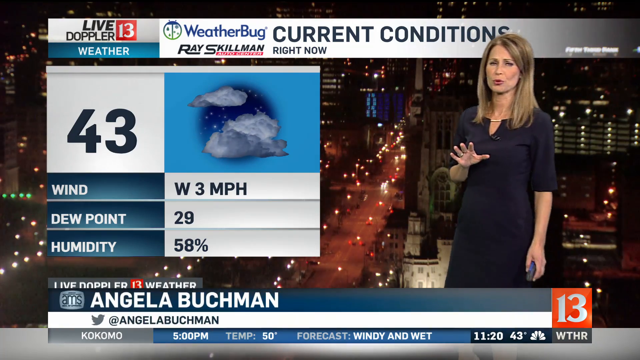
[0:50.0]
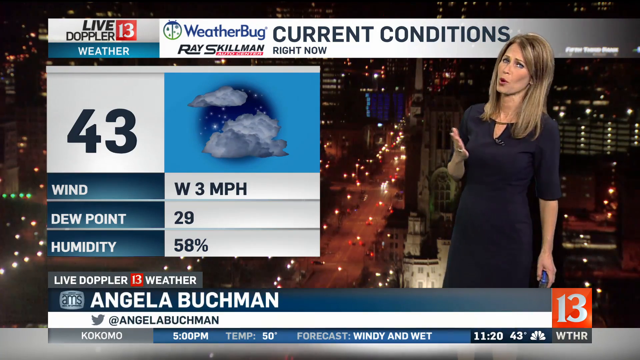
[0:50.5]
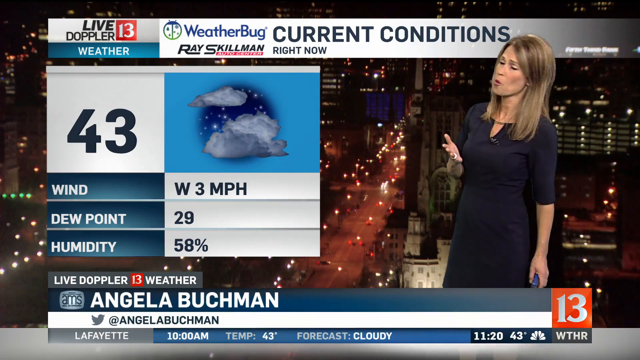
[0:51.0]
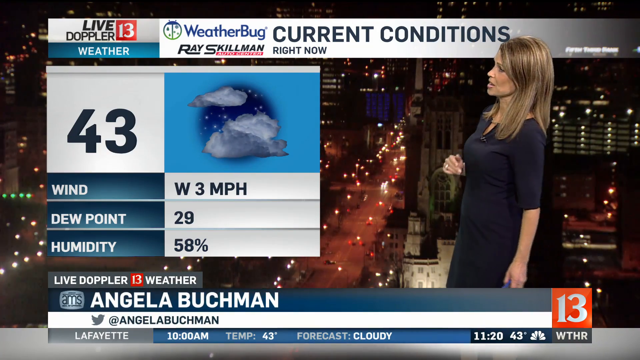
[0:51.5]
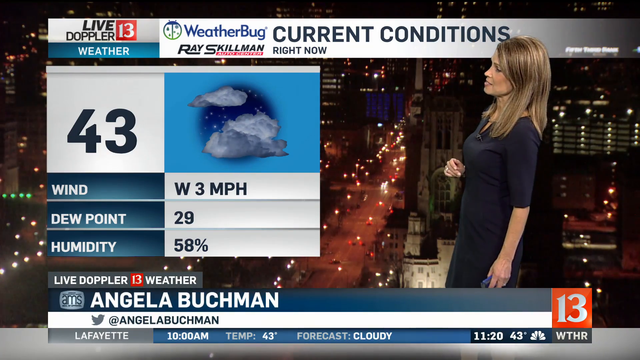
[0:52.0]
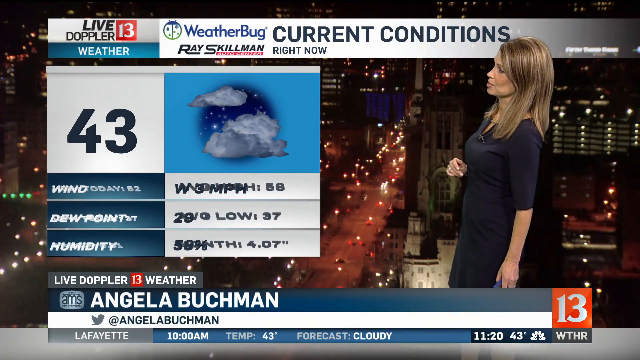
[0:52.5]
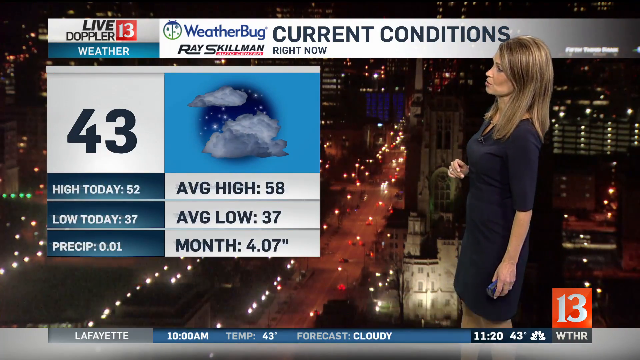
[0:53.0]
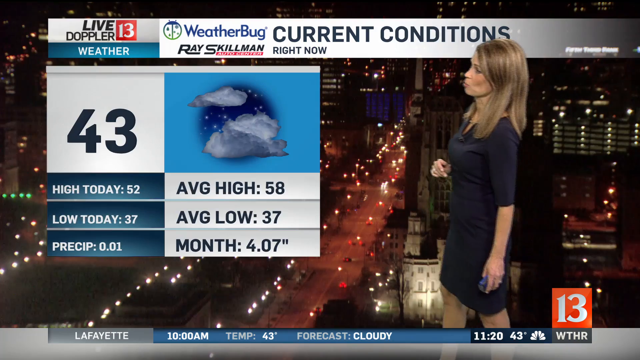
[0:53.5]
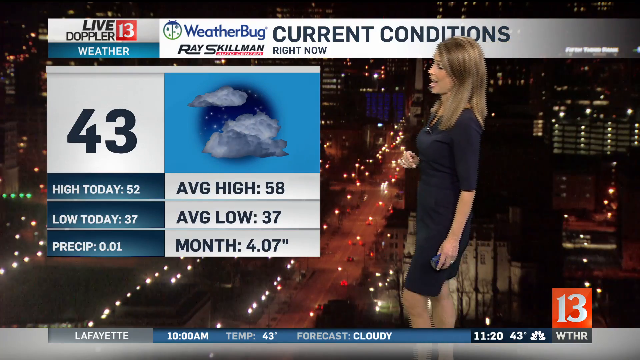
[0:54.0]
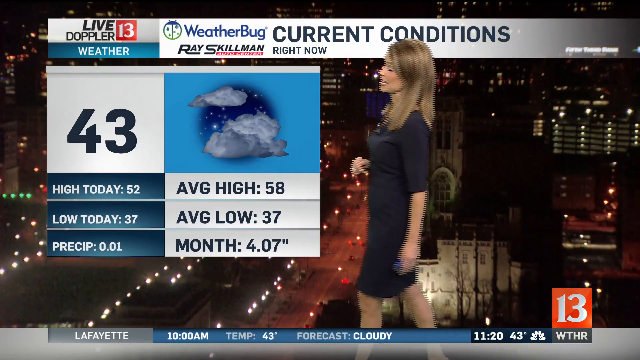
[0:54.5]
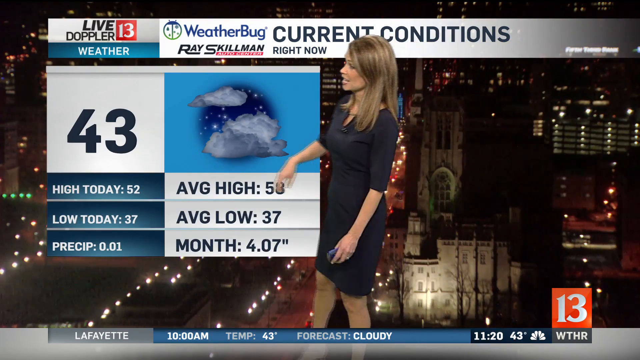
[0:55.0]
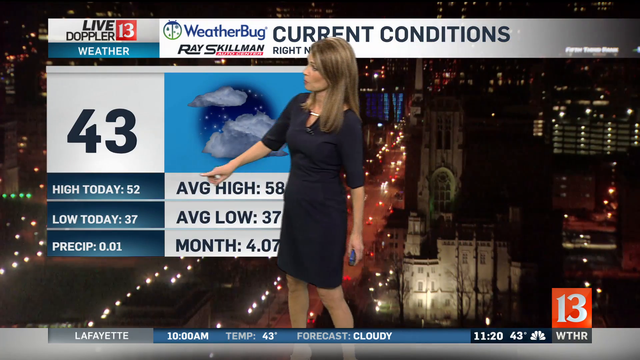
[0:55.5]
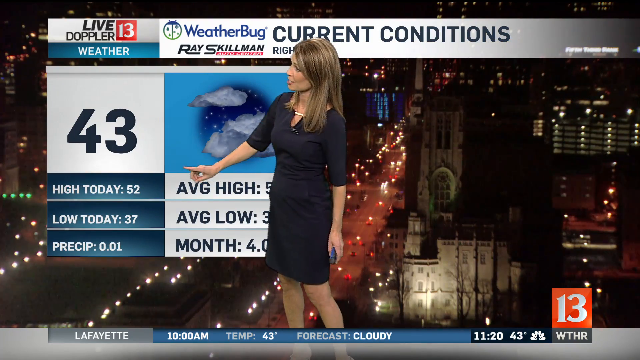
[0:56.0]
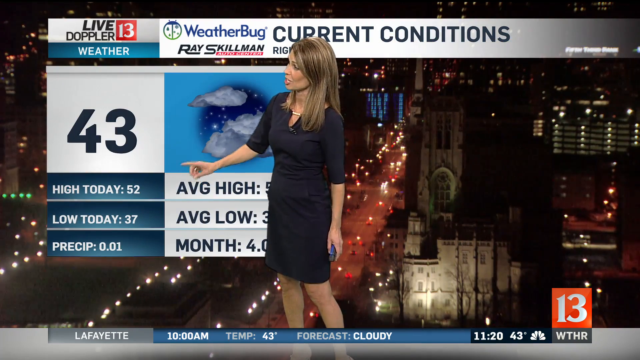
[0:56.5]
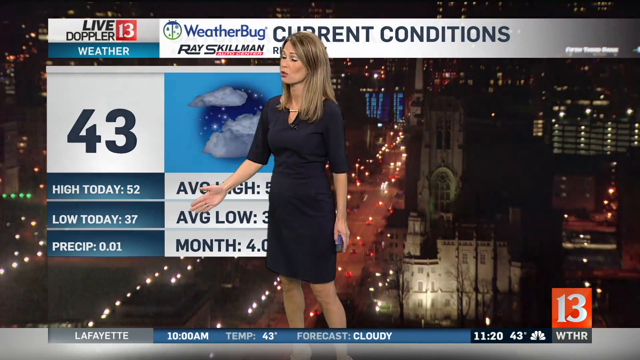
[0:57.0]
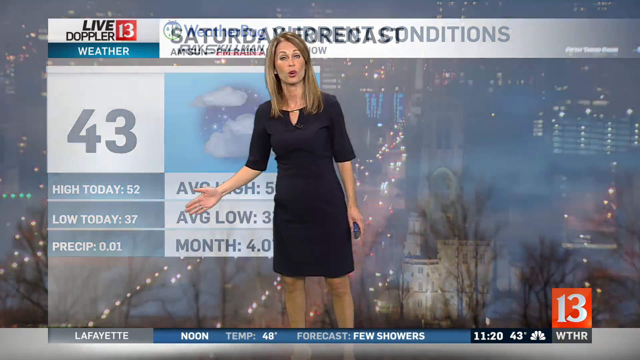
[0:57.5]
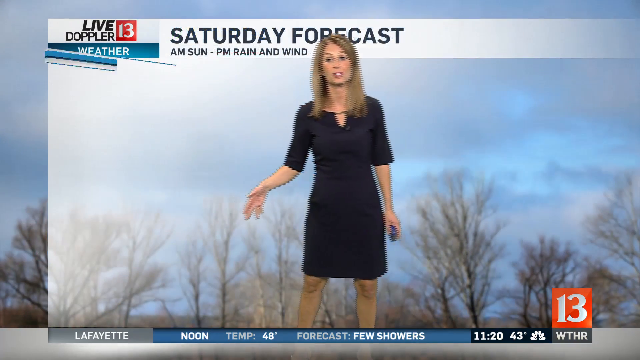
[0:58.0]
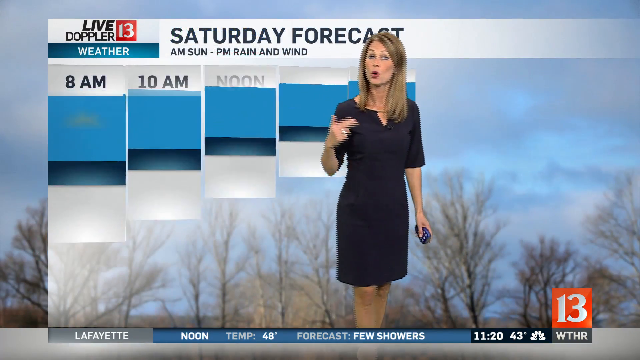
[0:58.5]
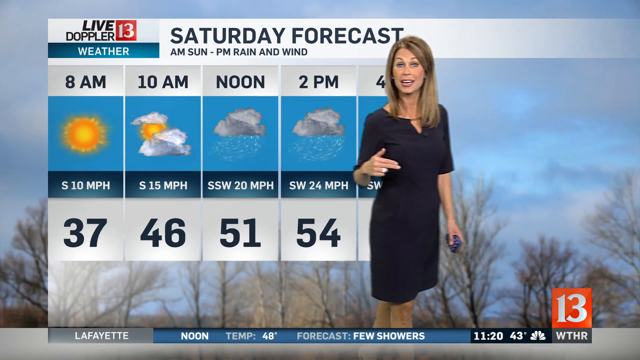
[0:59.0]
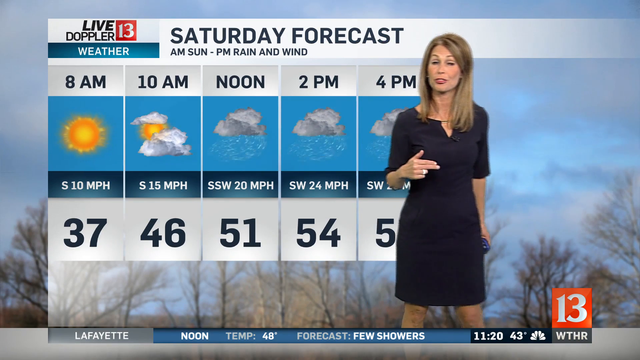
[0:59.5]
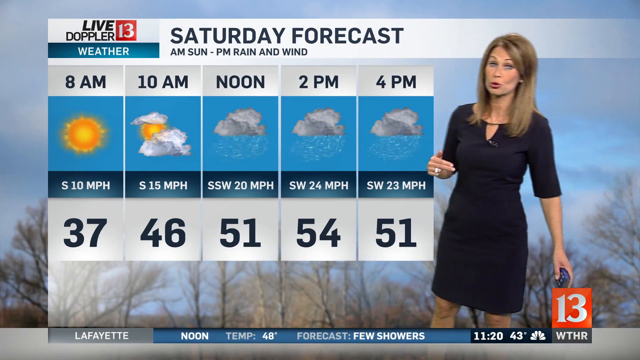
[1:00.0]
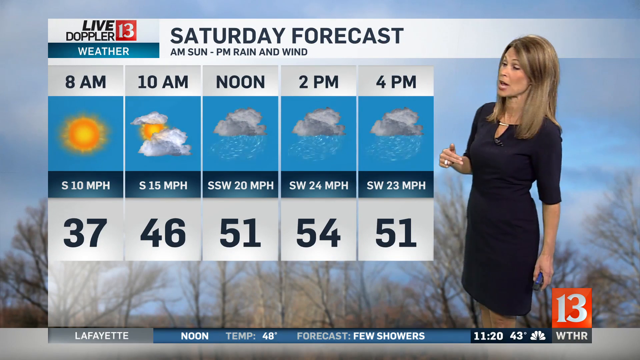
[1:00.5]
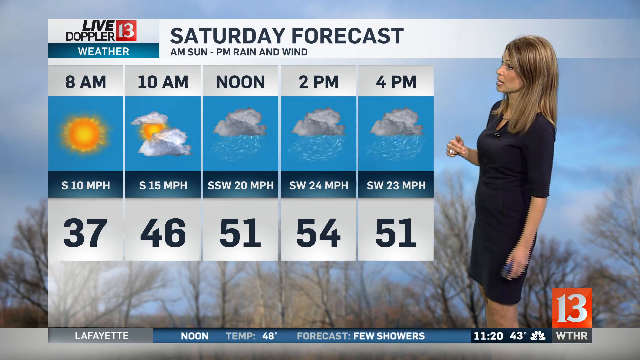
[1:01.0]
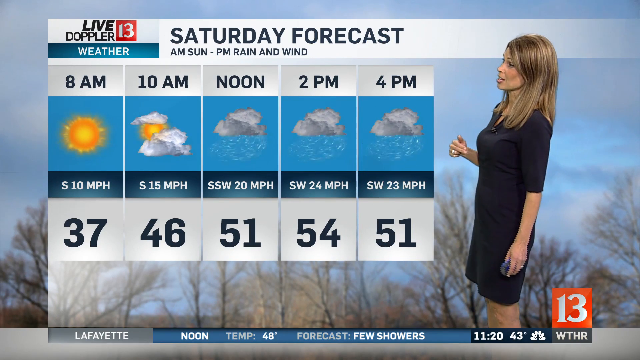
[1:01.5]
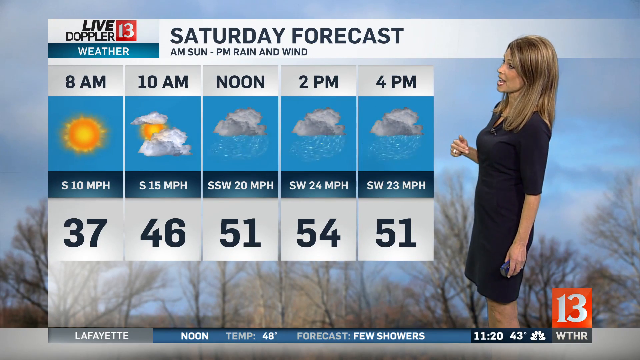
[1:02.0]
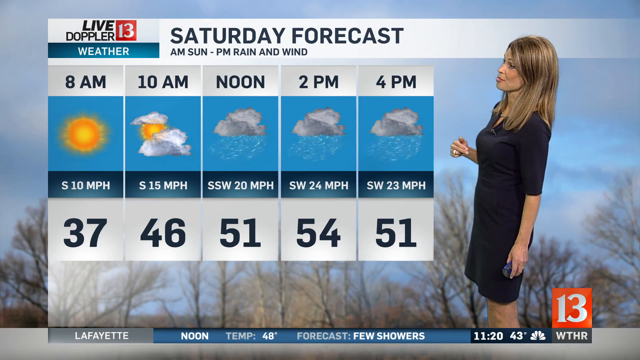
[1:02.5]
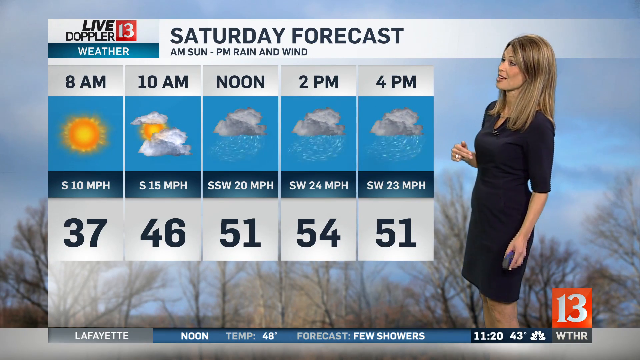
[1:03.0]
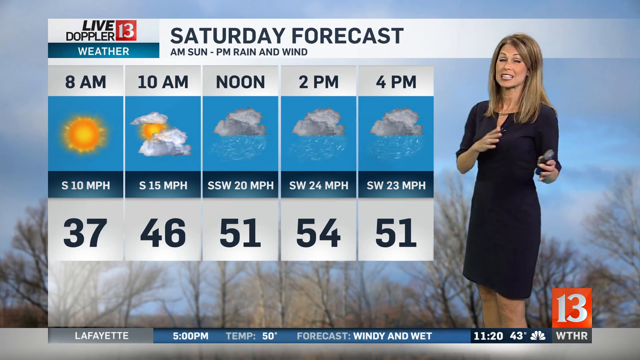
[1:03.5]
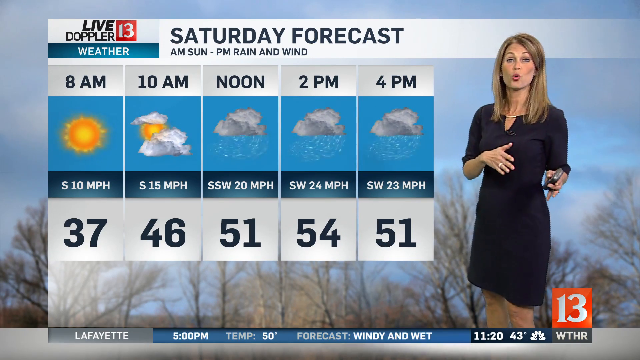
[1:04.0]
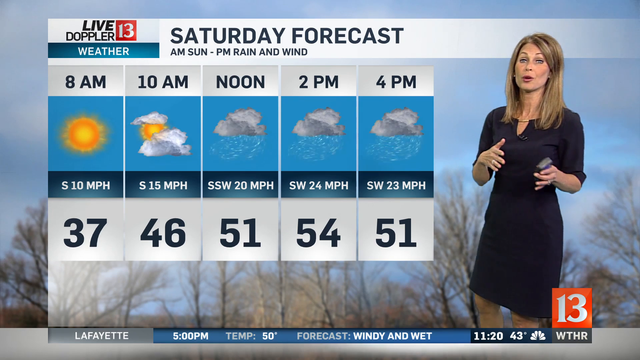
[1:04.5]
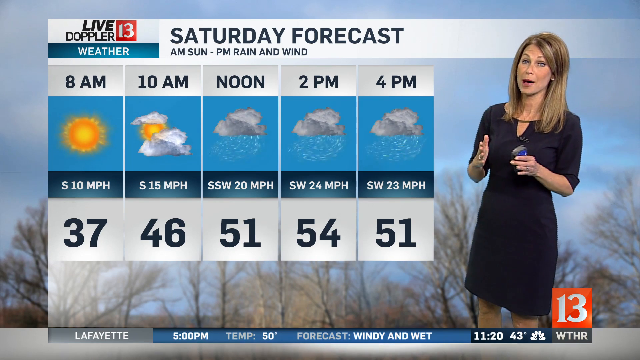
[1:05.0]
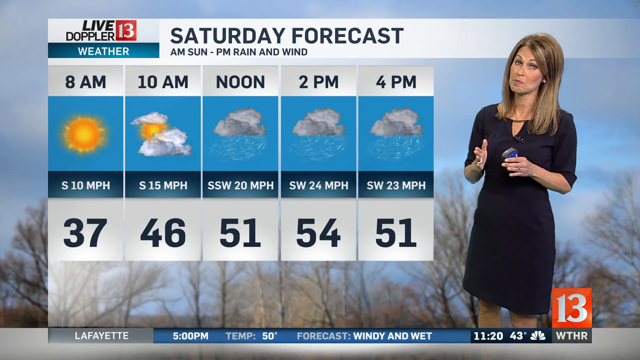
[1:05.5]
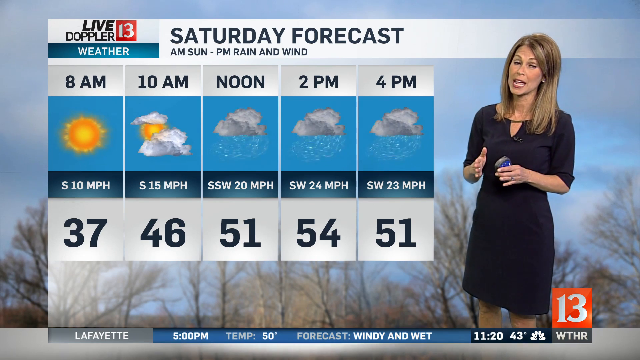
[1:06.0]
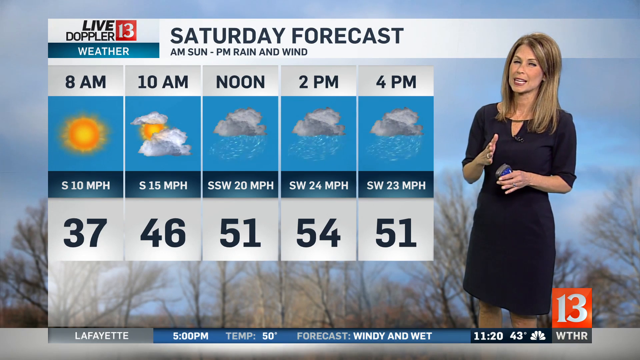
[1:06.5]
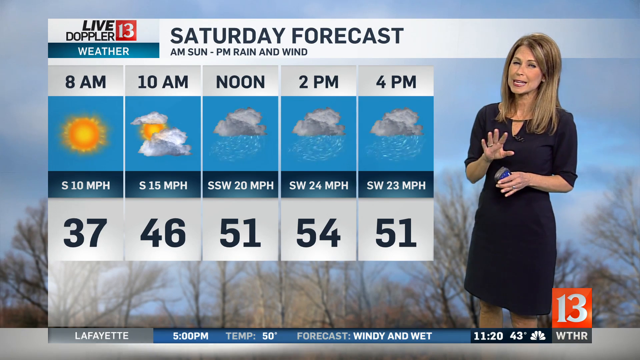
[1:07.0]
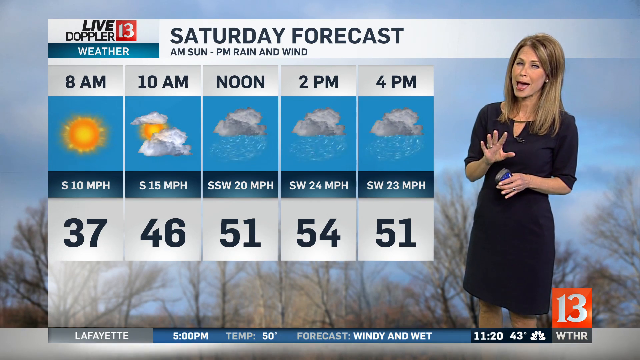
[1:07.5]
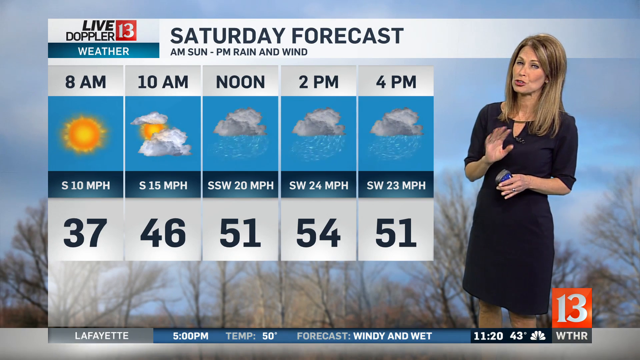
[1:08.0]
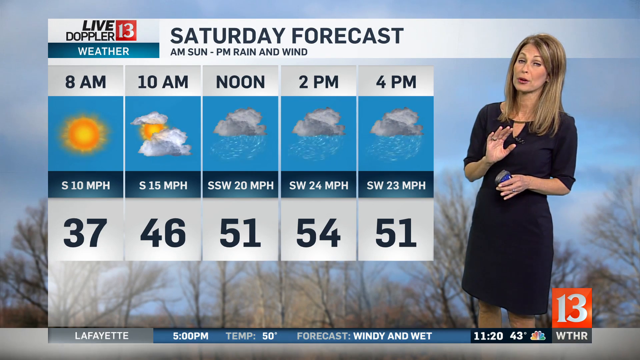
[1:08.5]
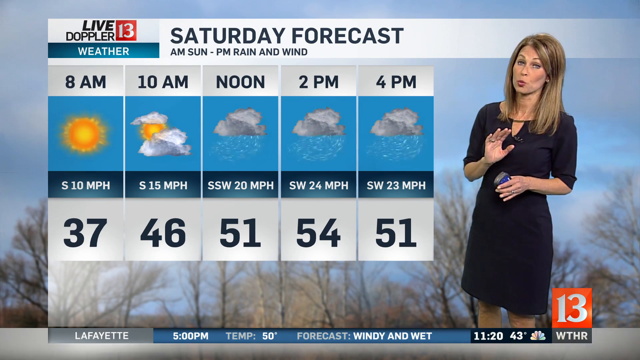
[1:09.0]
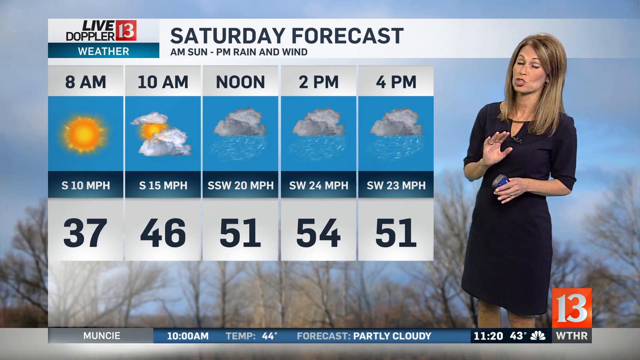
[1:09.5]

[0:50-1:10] A news reporter in a black dress with short blonde hair holds a remote in her hand. At the top of the screen "current conditions" for "right now" is written, with 43 degrees, wind W 3 MPH, dew point 29 and humidity 38 percent. The woman's name is shown as Angela Buchman. Angela comes into frame and talks, and then the display changes to 43 degrees: high today 52, average high 58, low today 37, average low 37, precipitation 0.01 and month 4.07". Angela goes over to point at the high today, and then a different screen appears: "Saturday forecast", "a.m. Sunday to p.m. rain and wind". It shows the times 8 a.m., 10 a.m., noon, 2 p.m. and 4 p.m., with 37 degrees at 8 a.m., 46 degrees at 10 a.m., 51 degrees at noon, 54 degrees at 2 p.m. and 51 degrees at 4 p.m.